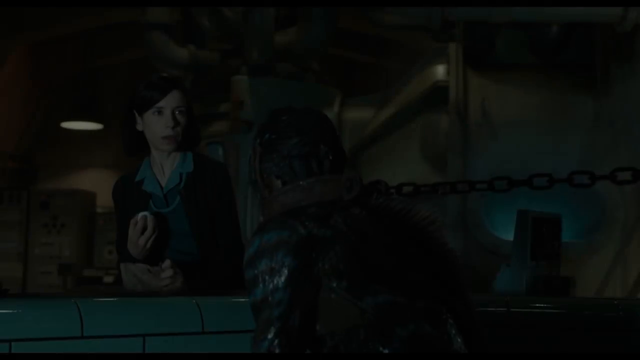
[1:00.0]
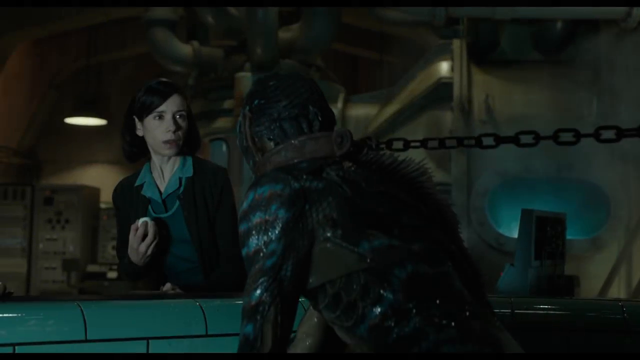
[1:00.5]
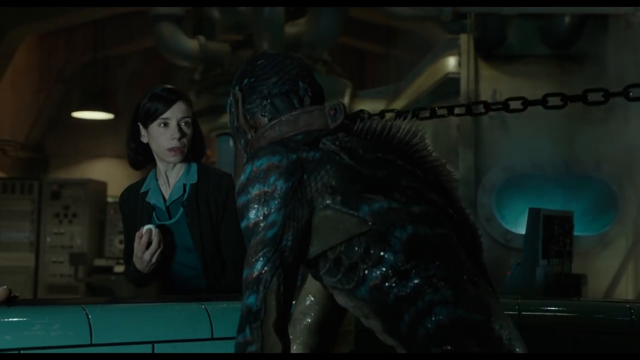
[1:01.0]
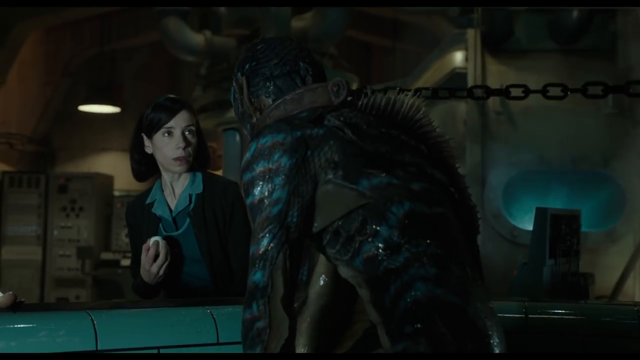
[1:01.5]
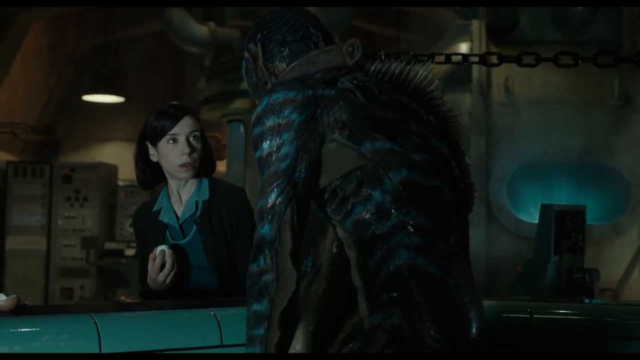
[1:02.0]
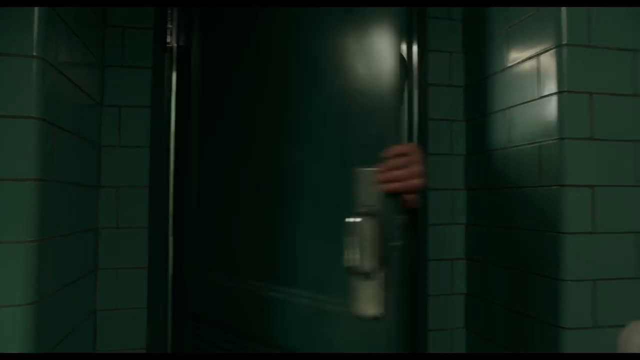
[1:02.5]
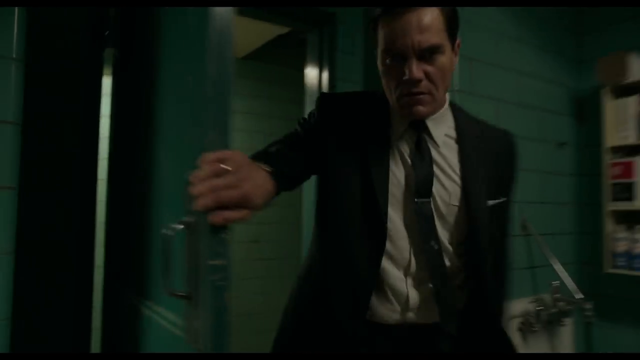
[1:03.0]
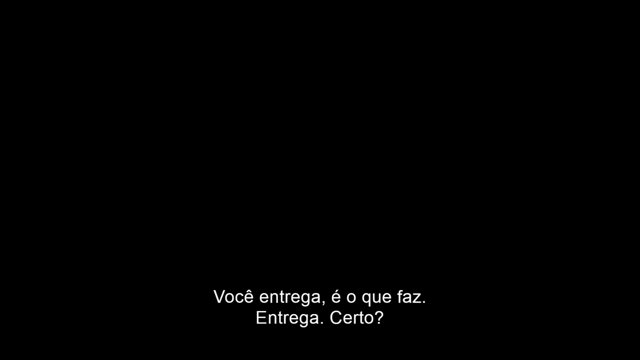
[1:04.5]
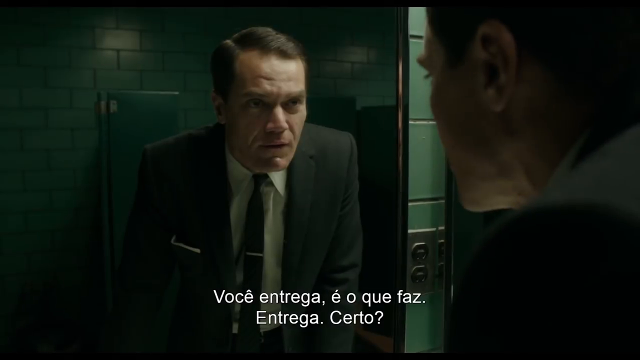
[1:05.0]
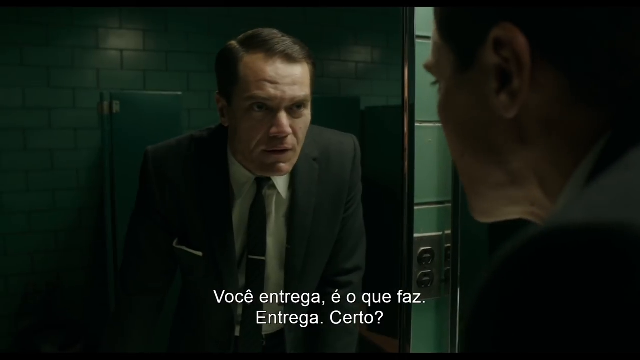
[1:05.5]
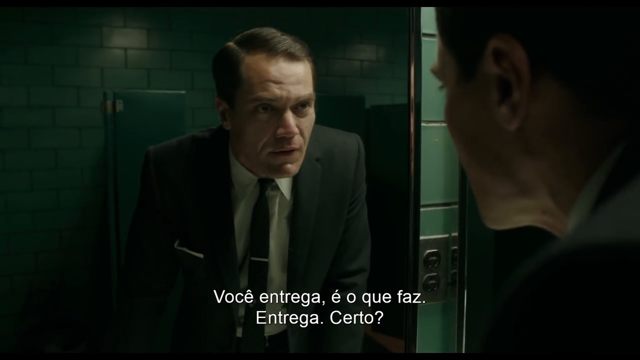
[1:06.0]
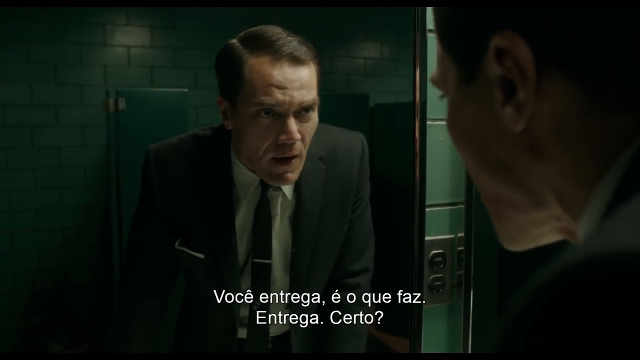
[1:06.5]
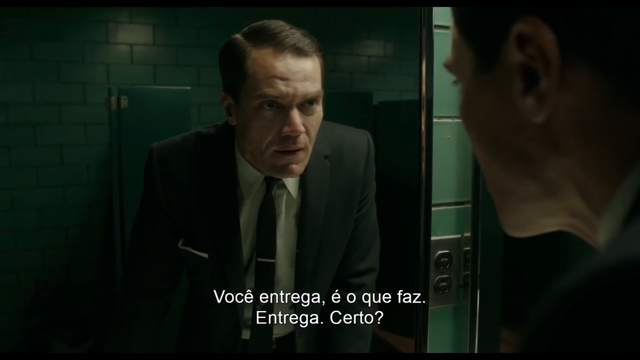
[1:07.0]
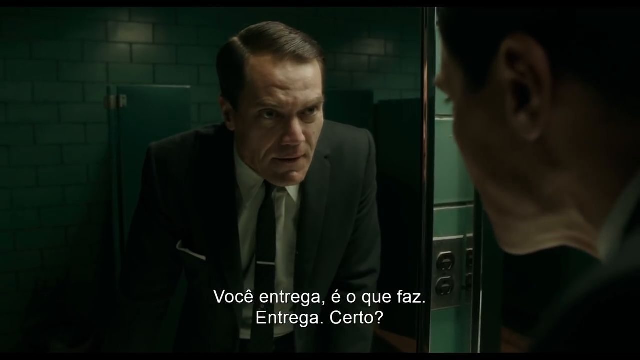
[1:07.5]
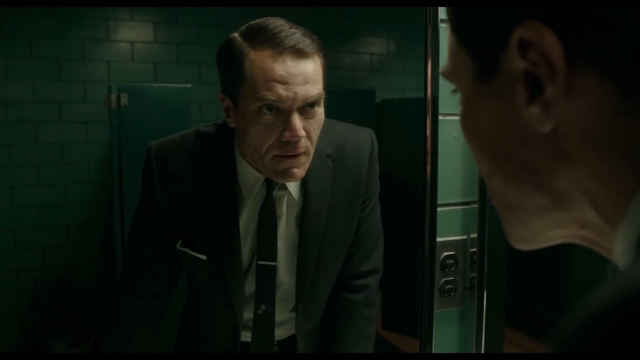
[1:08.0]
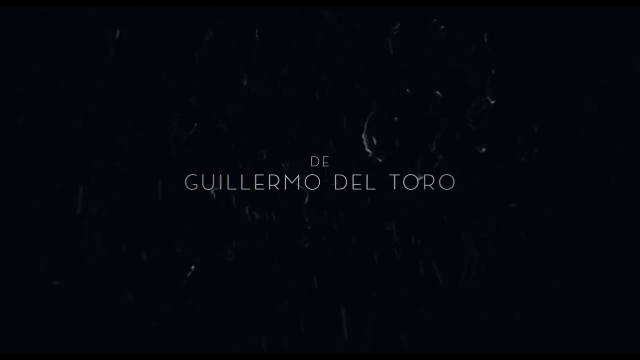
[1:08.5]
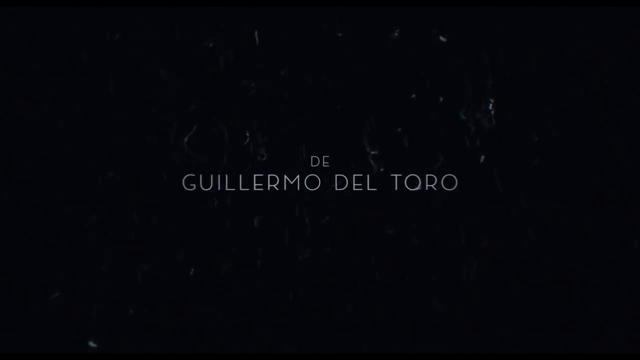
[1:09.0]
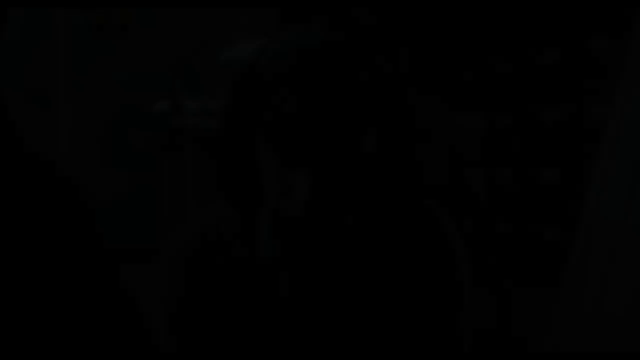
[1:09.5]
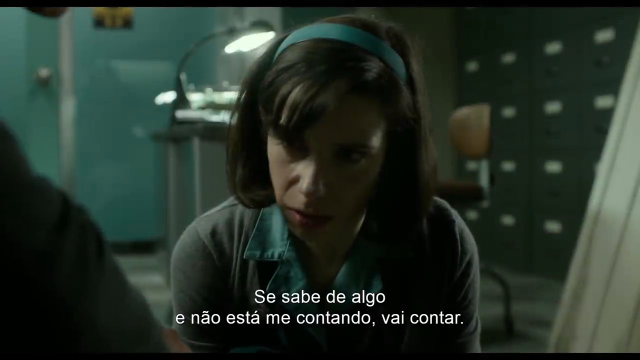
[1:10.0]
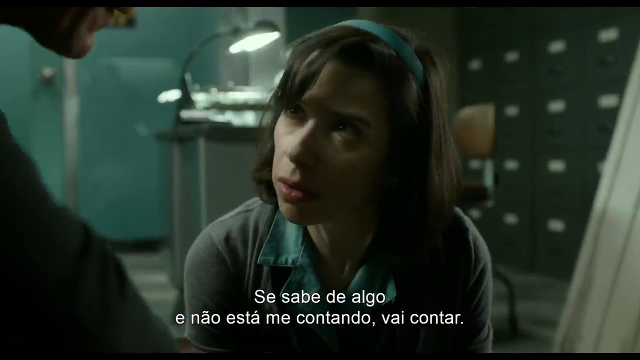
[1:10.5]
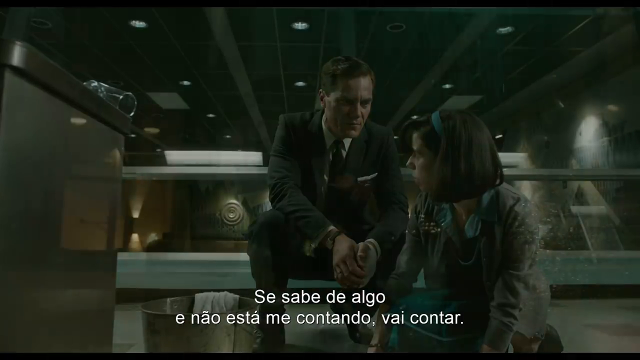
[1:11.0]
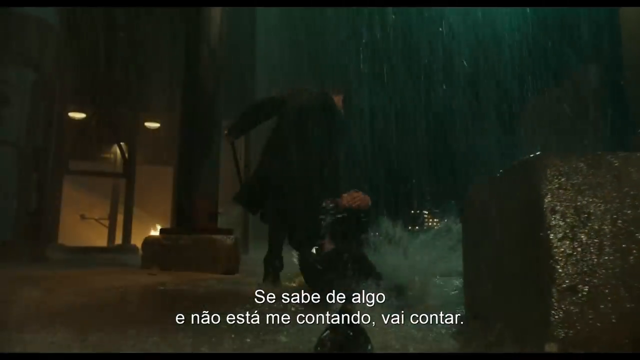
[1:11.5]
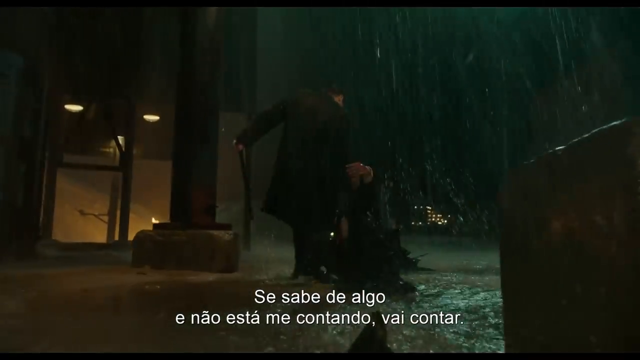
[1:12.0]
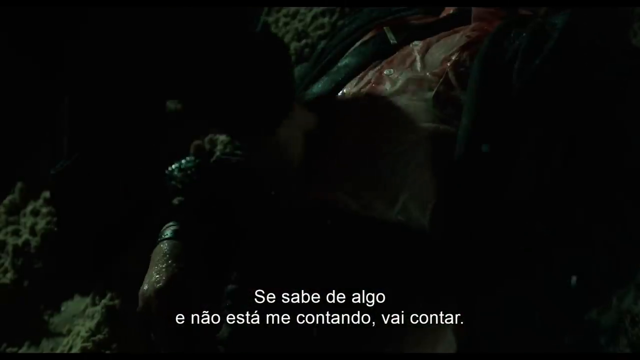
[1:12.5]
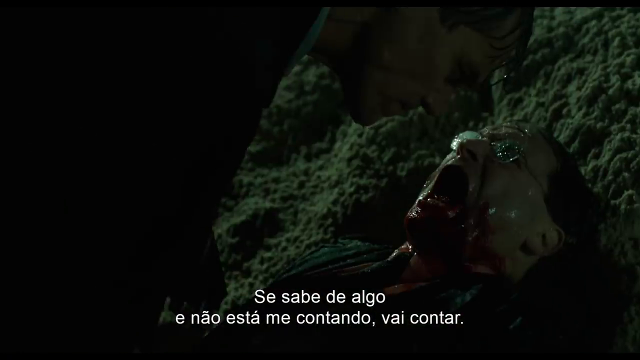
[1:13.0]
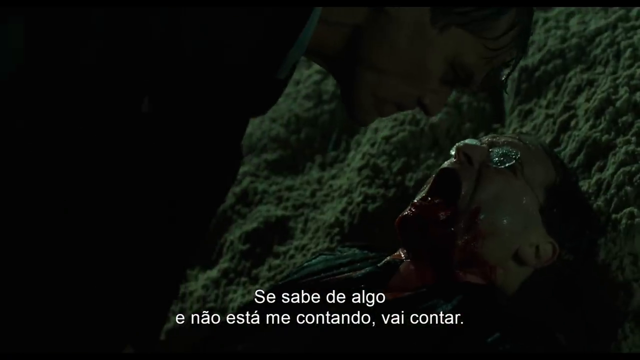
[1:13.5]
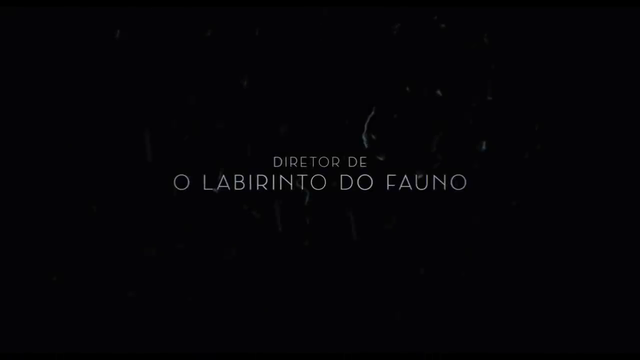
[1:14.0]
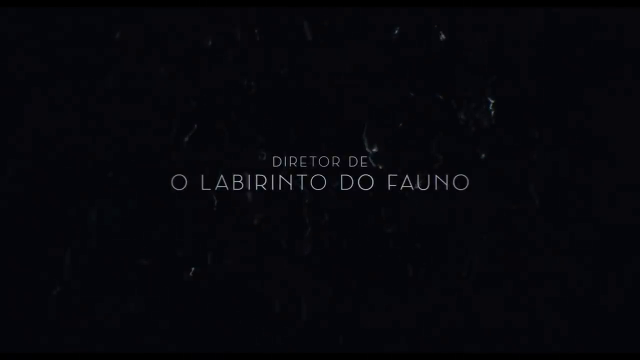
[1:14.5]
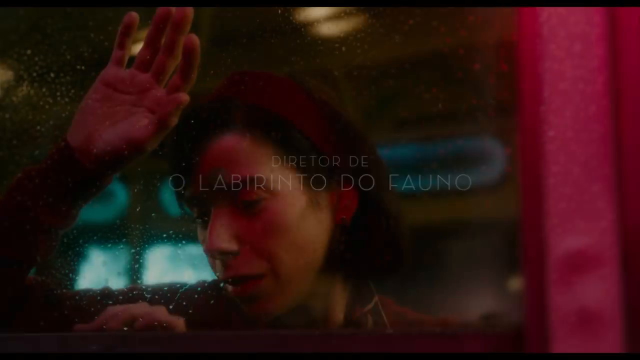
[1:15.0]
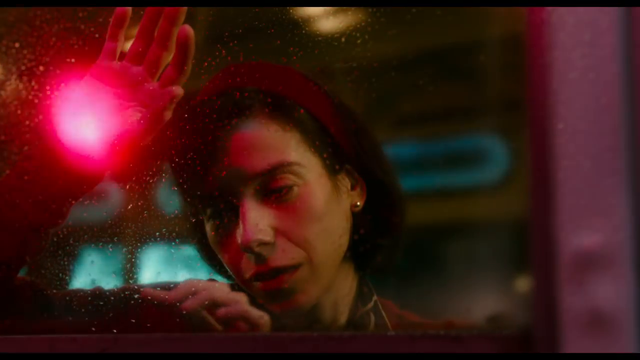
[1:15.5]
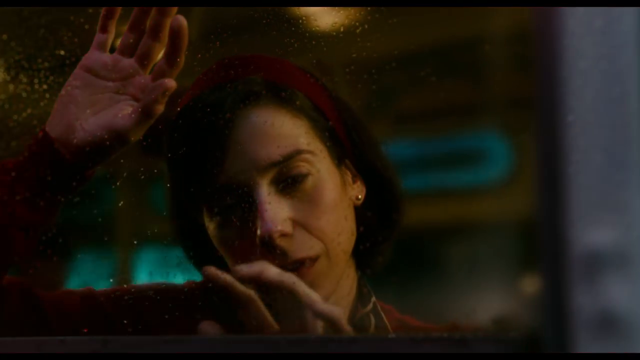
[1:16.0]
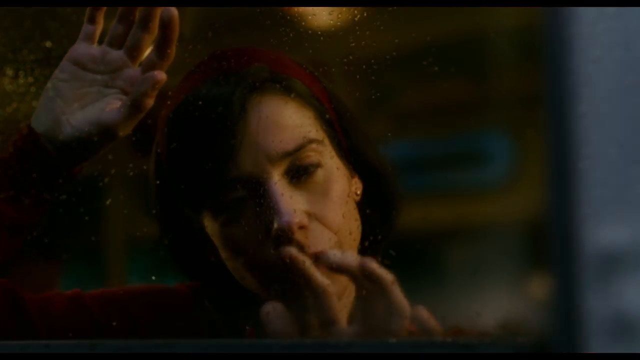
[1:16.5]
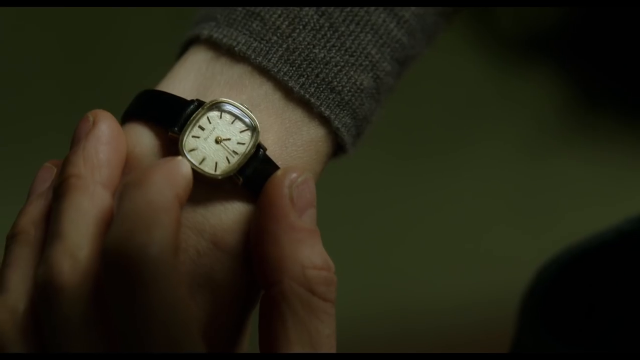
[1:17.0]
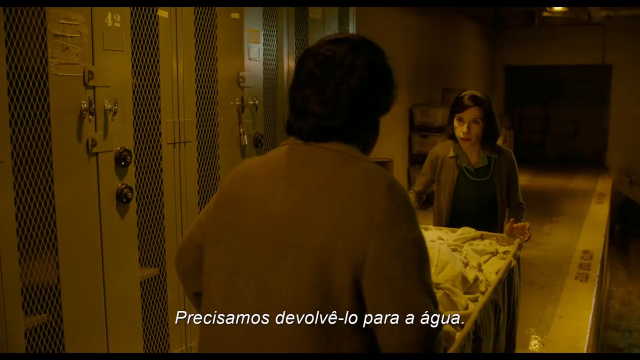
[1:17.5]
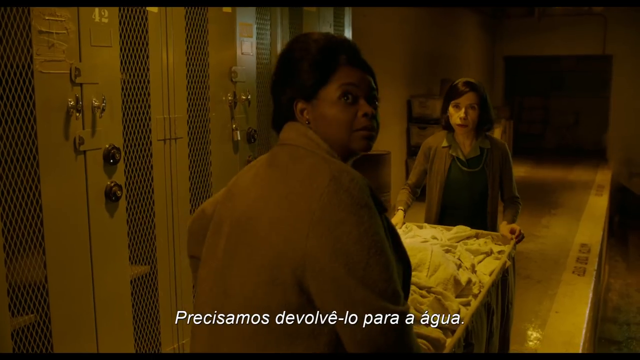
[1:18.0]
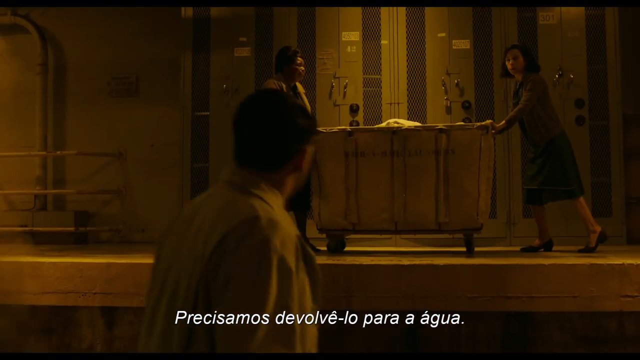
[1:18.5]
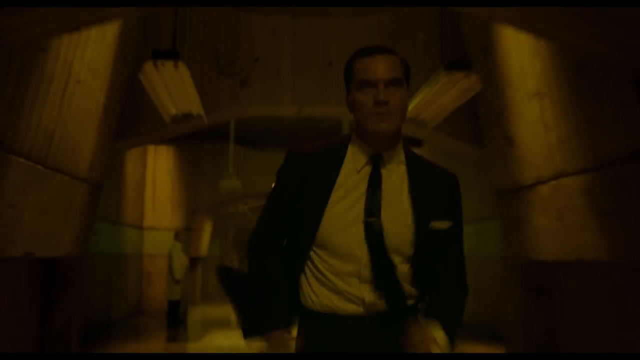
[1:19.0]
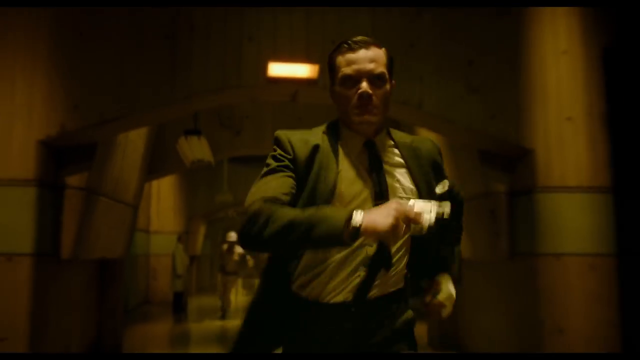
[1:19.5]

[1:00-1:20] A woman appears to be in an underground facility. She is on the left side of the screen, with dark brown or black hair that is hard to make out in the low light, and wears a dark-colored sweater over an old-fashioned-looking shirt. She looks at a creature with a chain and collar around its neck, spikes on its back and striped skin. The video switches to a man in a suit and tie entering a doorway, looking serious. Then the same man is in a room with a mirror, probably a bathroom, and appears to be talking to himself in the mirror. White text at the bottom of the screen says "VOCE Entrega E O que faz Entrega. CERTO ?"